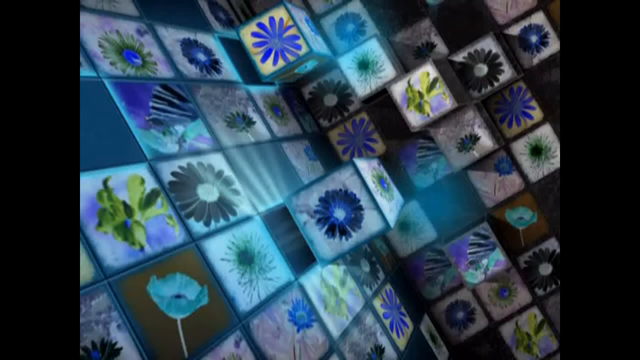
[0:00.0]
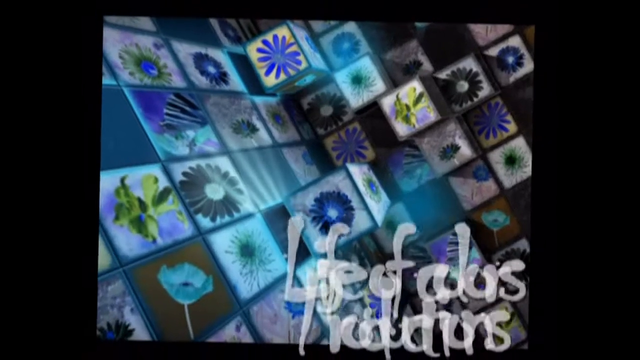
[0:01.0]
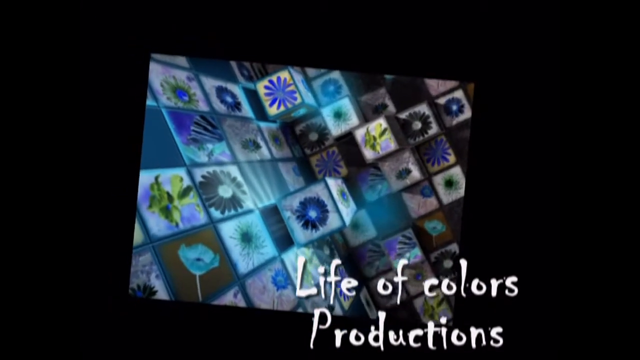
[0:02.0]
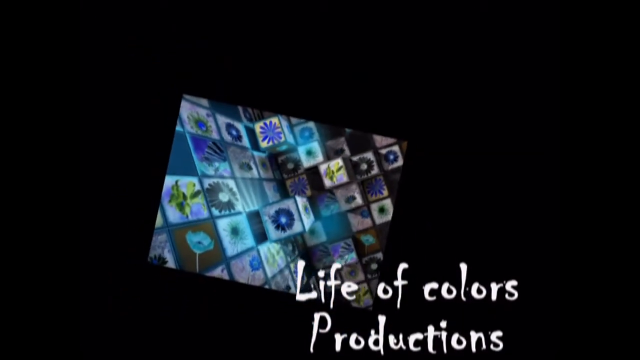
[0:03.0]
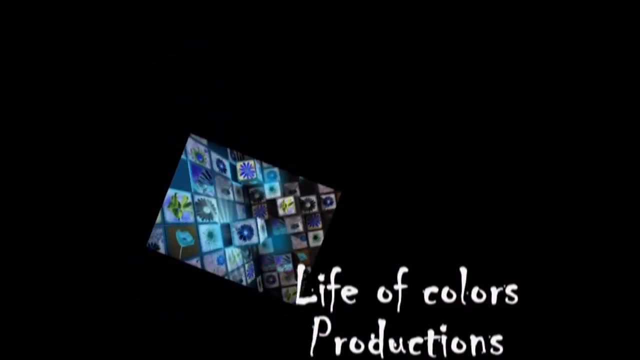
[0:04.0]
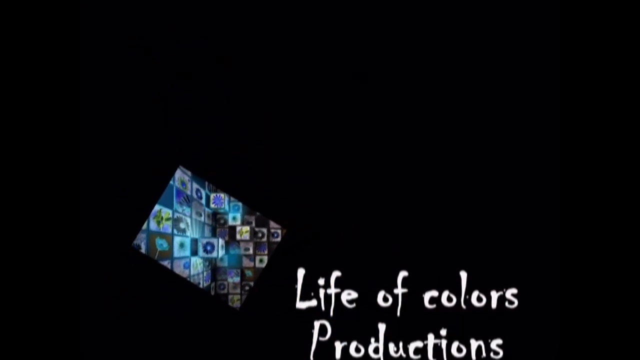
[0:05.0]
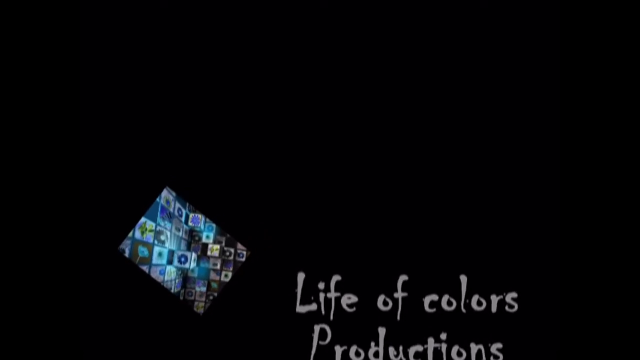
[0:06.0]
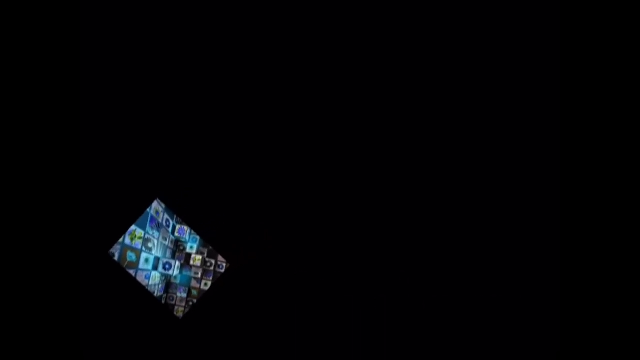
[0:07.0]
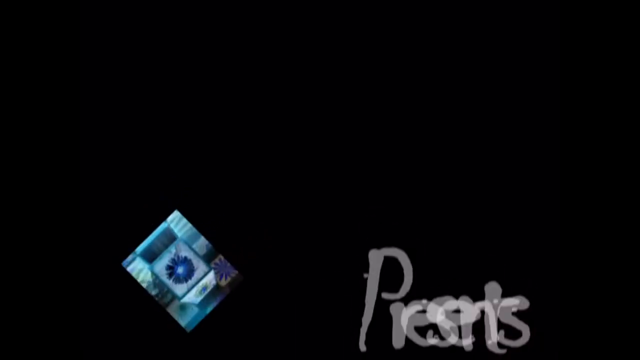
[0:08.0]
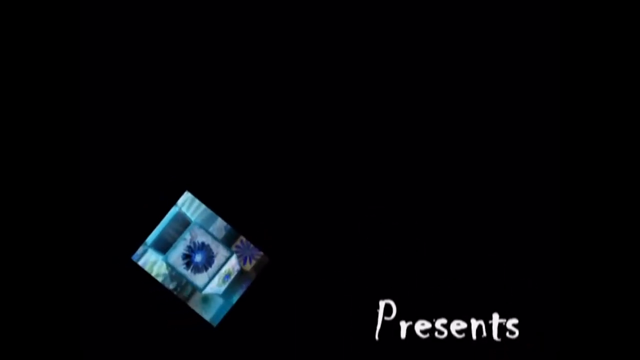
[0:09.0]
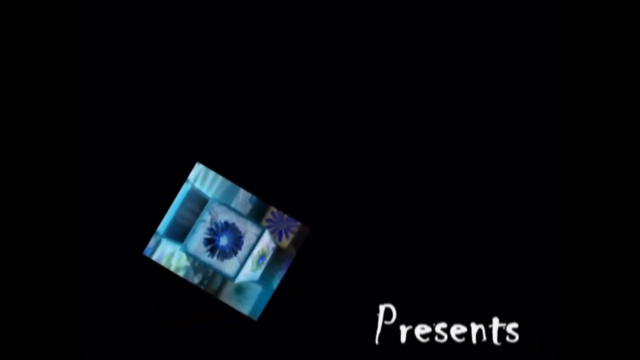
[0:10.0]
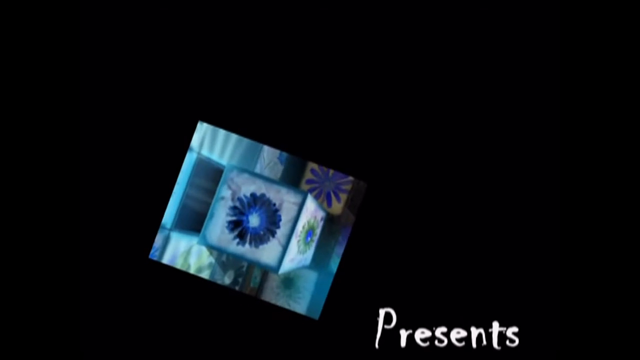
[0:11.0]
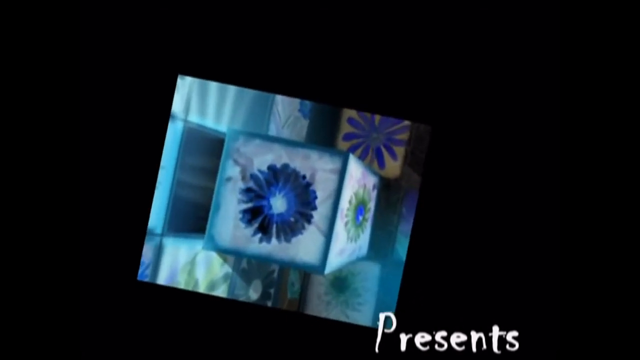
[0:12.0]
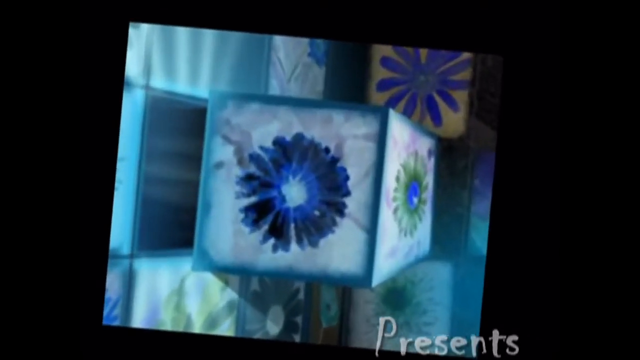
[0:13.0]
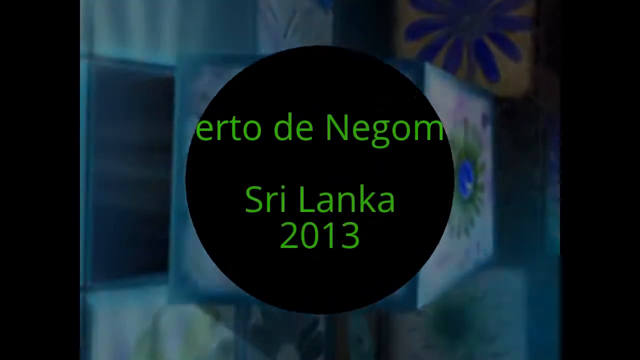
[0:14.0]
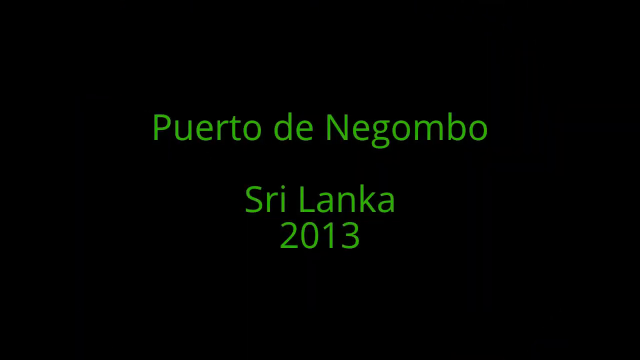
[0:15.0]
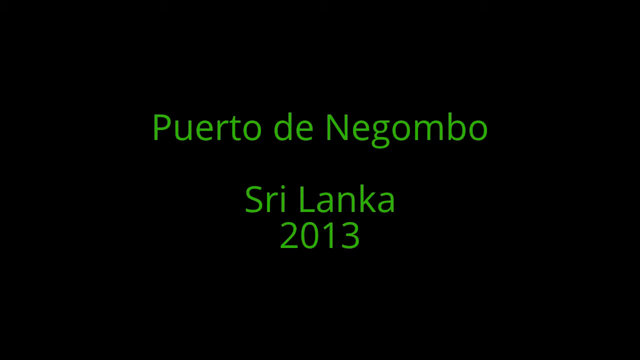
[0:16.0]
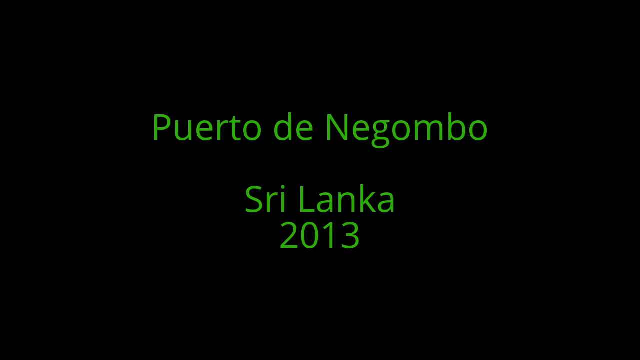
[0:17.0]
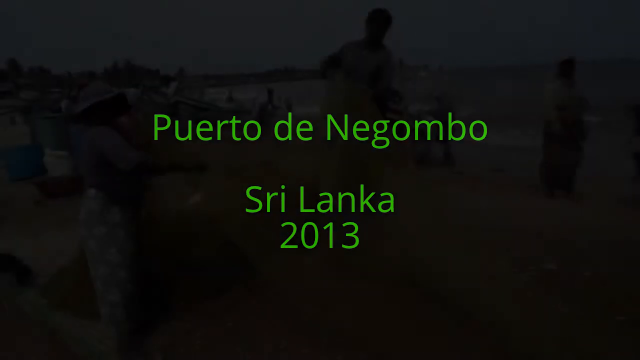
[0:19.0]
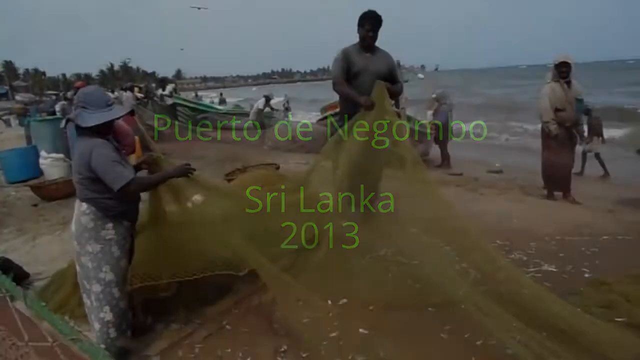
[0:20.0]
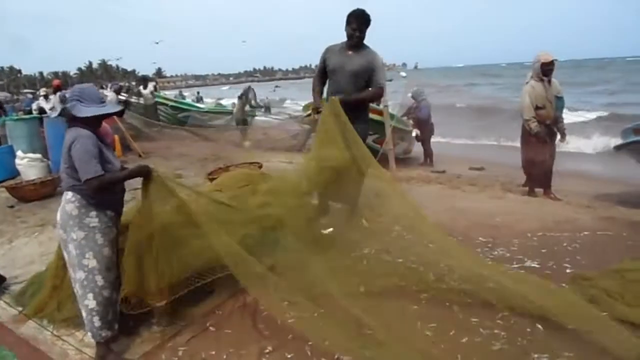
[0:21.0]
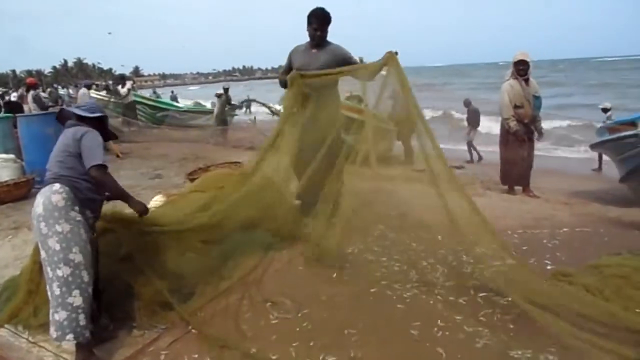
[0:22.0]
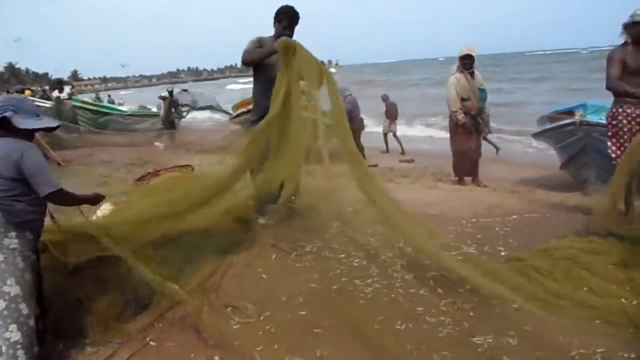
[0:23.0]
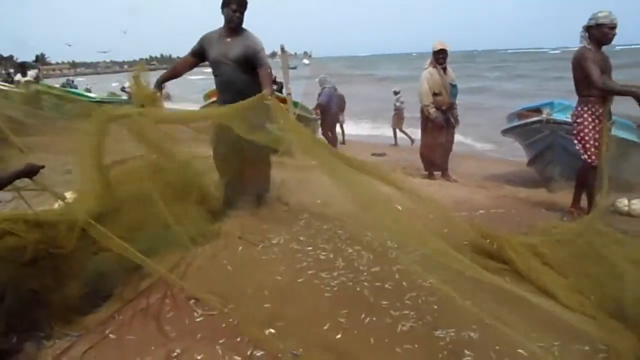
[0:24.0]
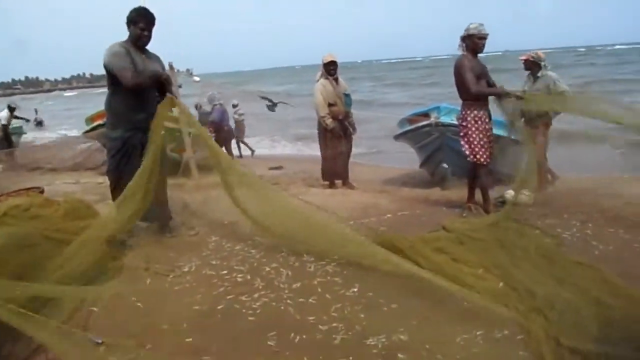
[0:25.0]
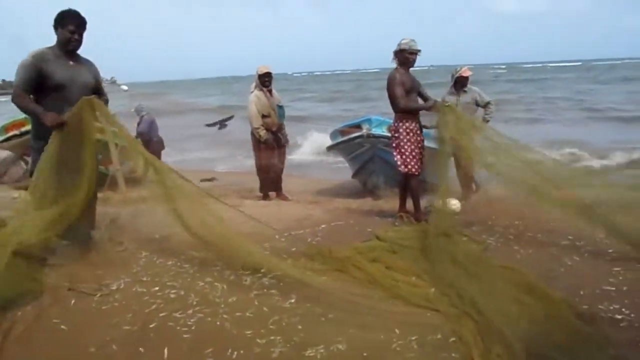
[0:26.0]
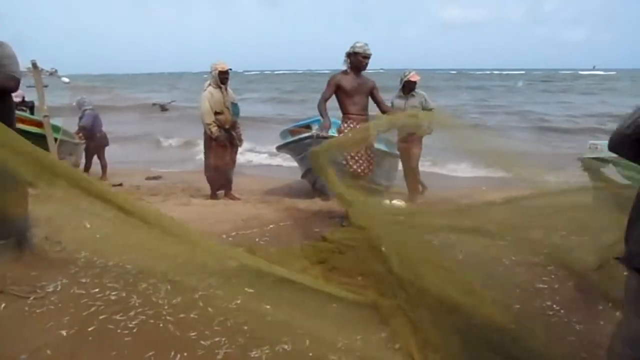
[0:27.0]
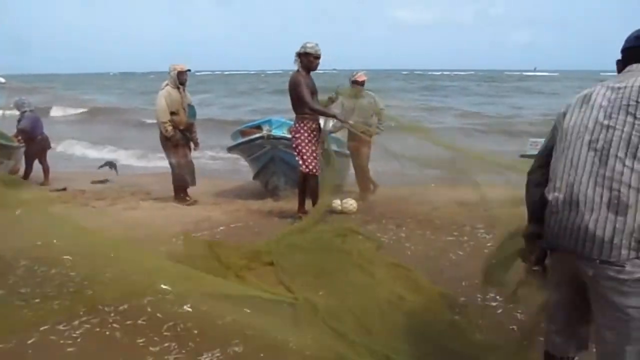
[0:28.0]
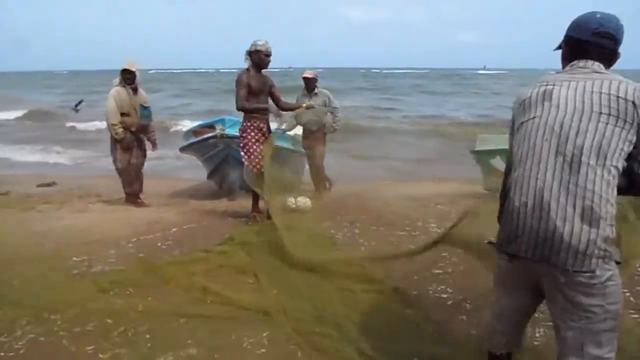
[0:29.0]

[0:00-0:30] An animated collection of cubes with a blue, aquatic color scheme, along with some green, whites, grays and blacks, fills the opening. Each cube has a different symbol or design: a few have a black flower, one has a black and white striped fish, and others show green plants and blue flowers. Some of the images appear to be in negative, a bit like negative film. In the bottom right of the screen, text reads "Life of Colors Productions." The image of the cubes shrinks, gets smaller and fades into a black background, and the text changes to "Presents." The view then zooms in on one of the cubes showing a negative flower, which fades into a black screen with green text reading "Puerto de Negombo, Sri Lanka, 2013." After a while the text fades away, revealing a large group of people on a beach. The focus is on two people untangling a fishing net; they appear to be fishing on the beach with big nets, and many people are pulling at the nets.